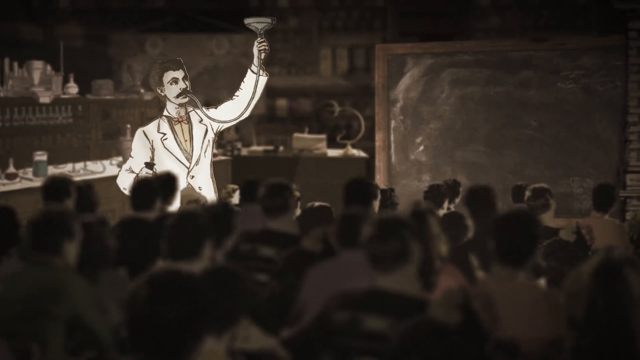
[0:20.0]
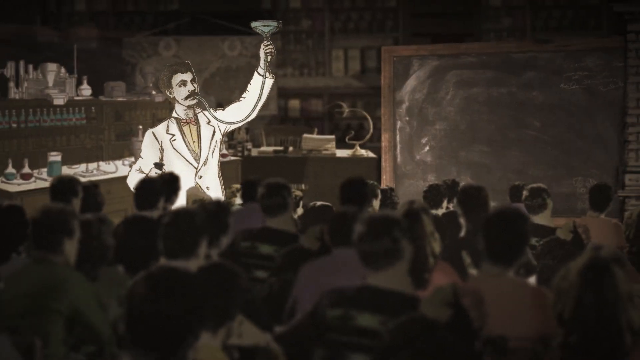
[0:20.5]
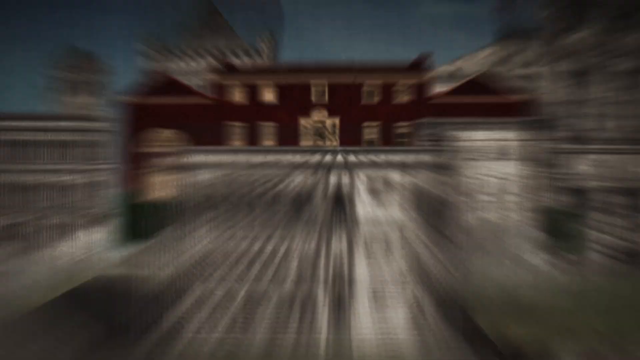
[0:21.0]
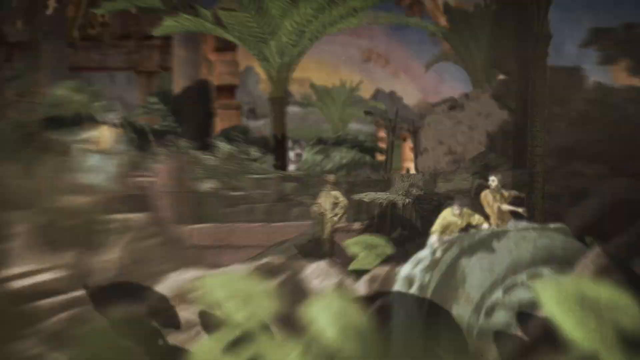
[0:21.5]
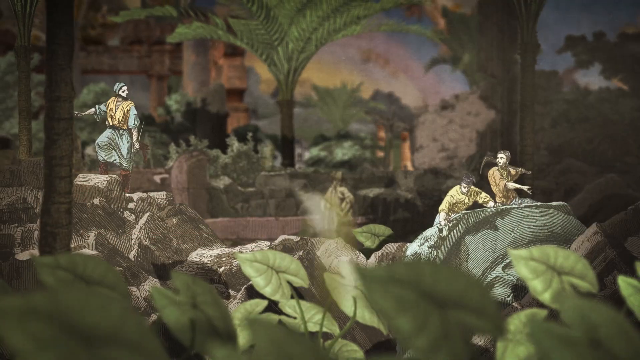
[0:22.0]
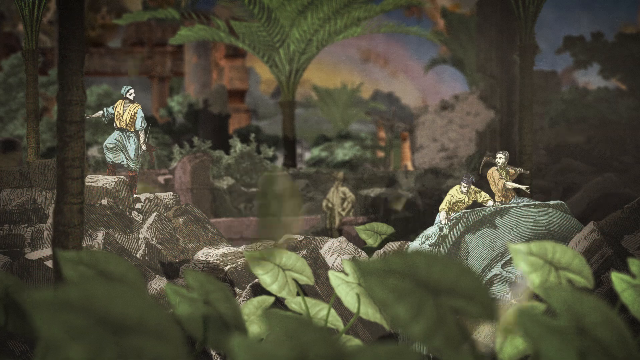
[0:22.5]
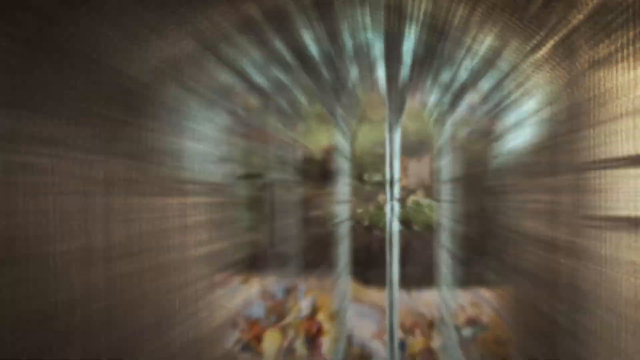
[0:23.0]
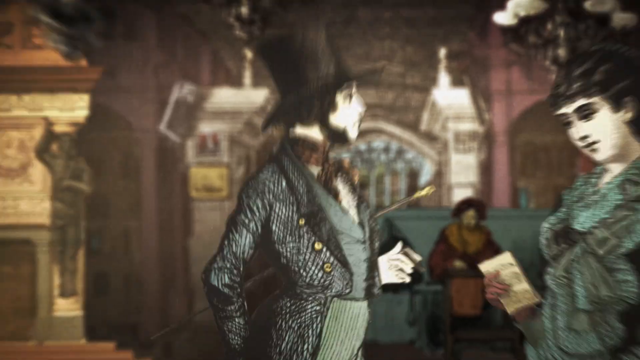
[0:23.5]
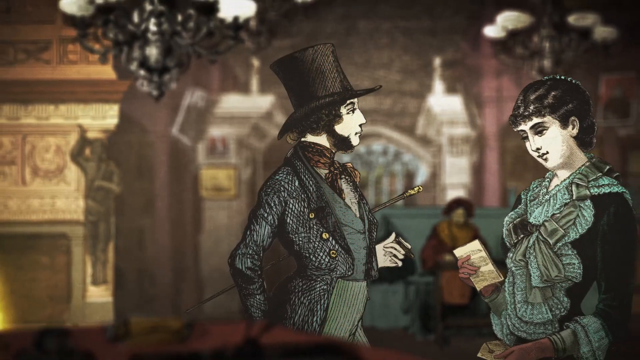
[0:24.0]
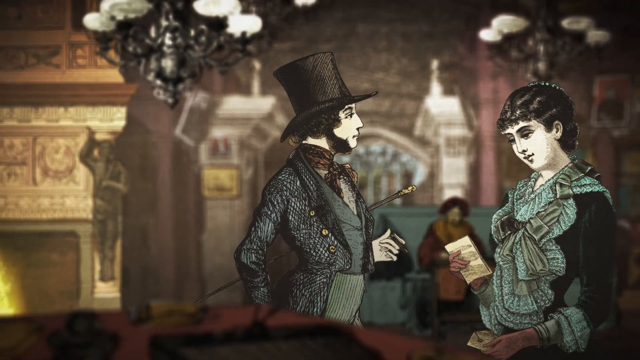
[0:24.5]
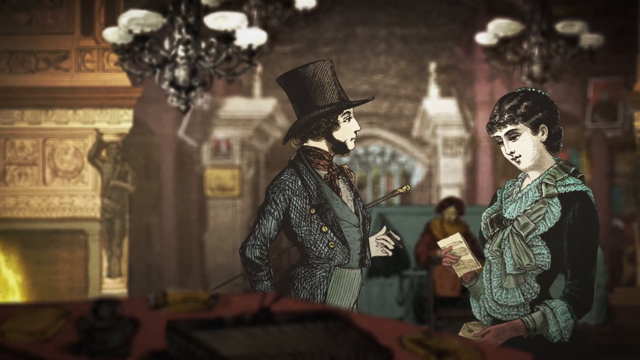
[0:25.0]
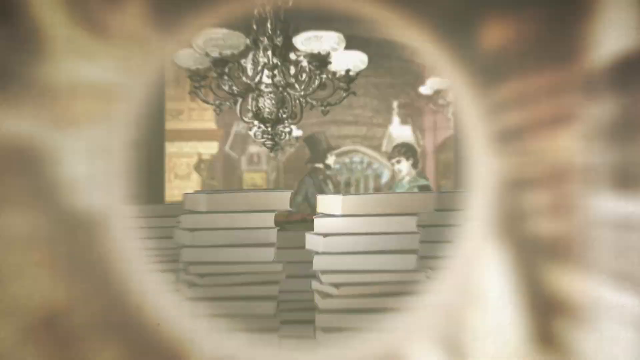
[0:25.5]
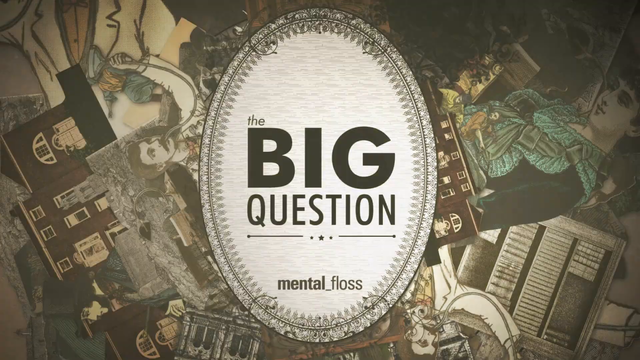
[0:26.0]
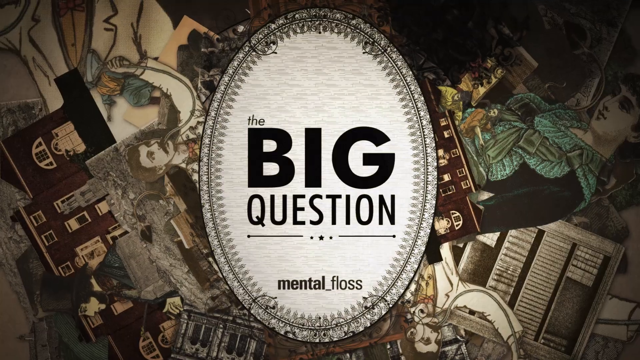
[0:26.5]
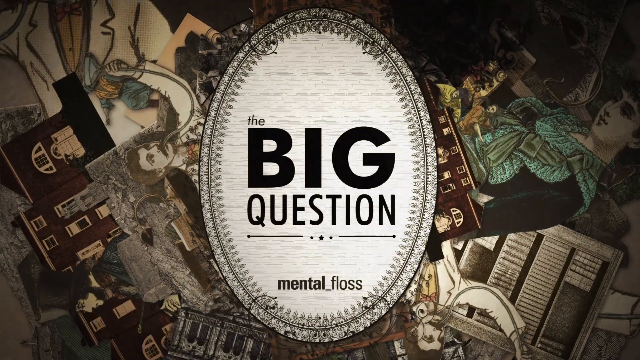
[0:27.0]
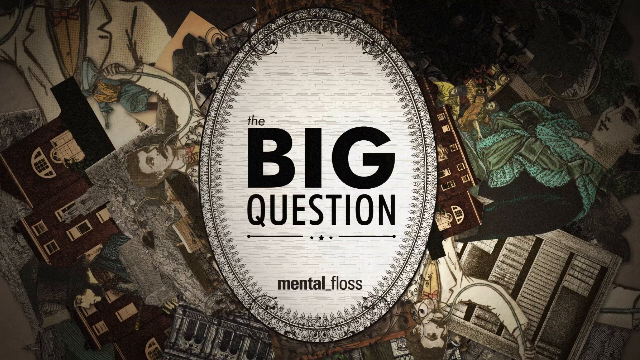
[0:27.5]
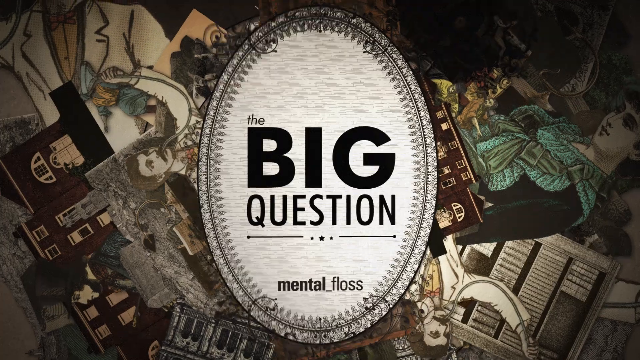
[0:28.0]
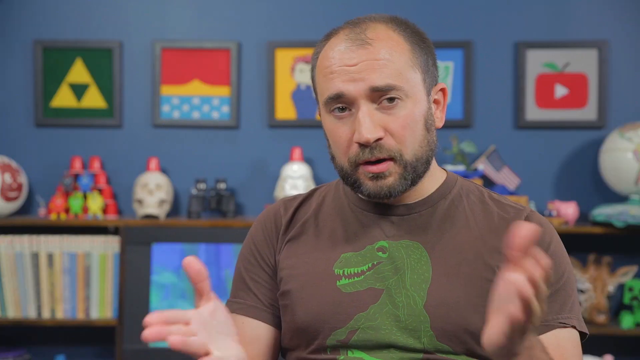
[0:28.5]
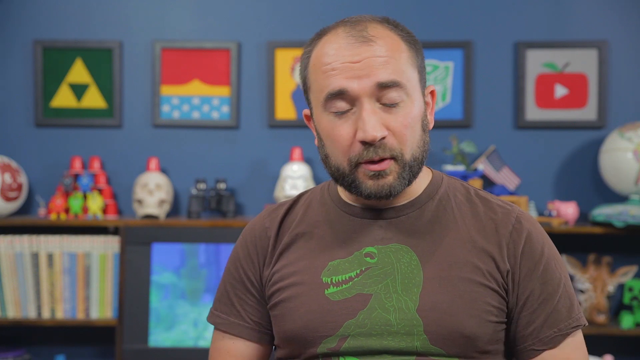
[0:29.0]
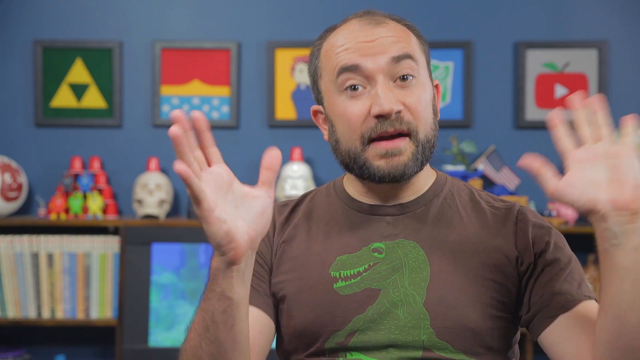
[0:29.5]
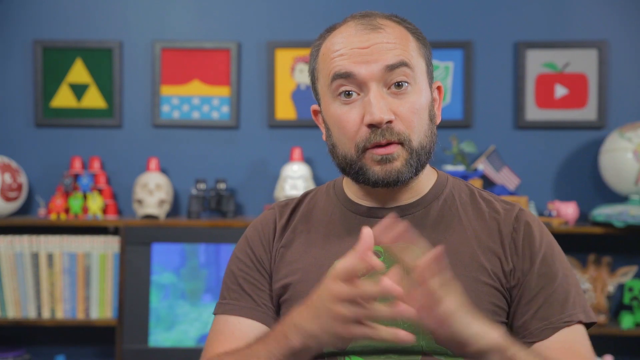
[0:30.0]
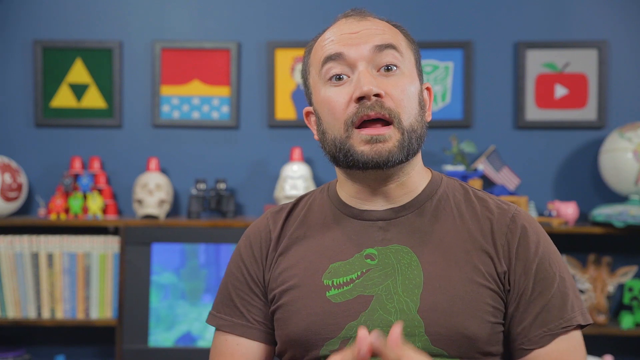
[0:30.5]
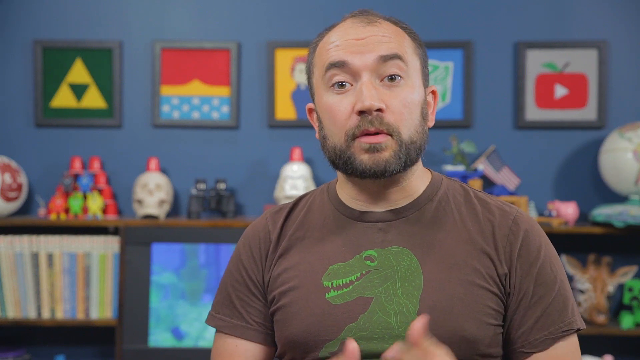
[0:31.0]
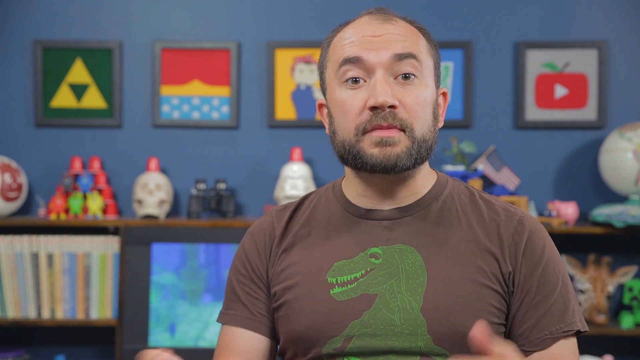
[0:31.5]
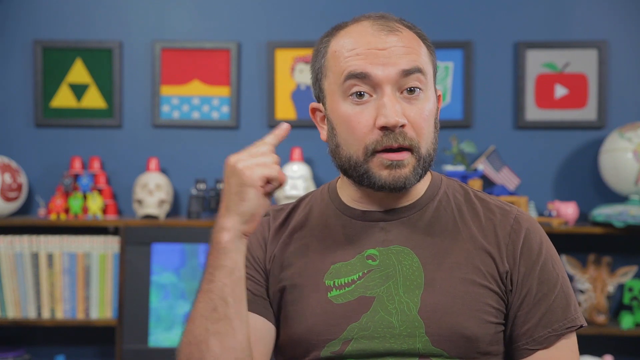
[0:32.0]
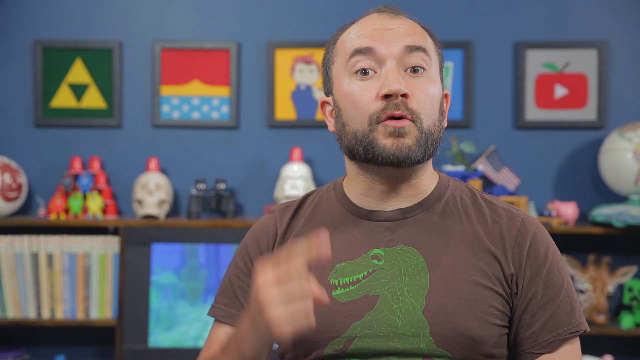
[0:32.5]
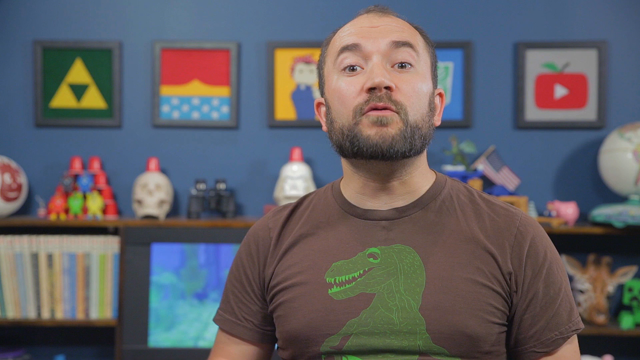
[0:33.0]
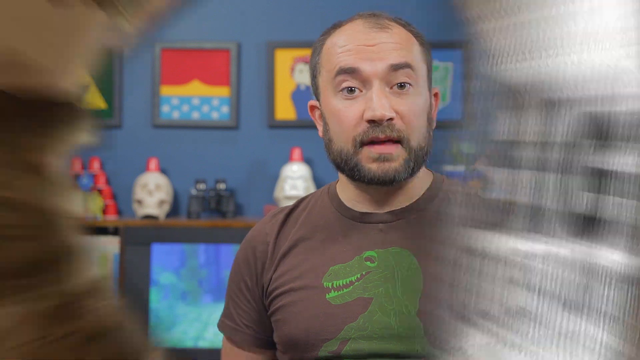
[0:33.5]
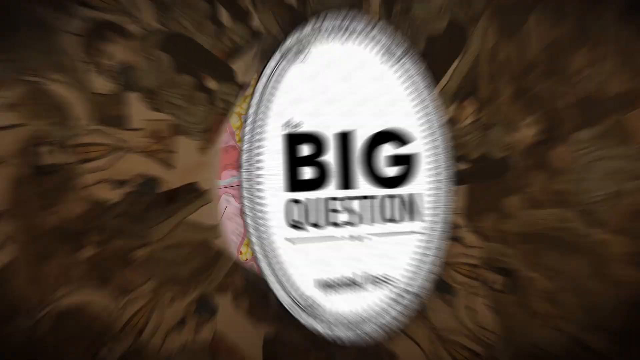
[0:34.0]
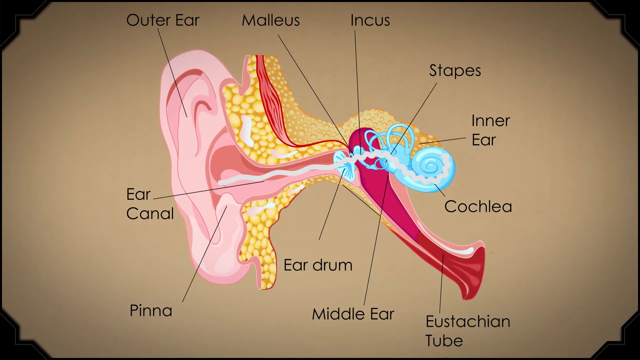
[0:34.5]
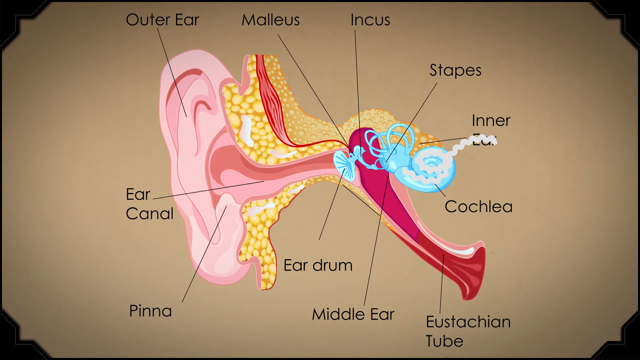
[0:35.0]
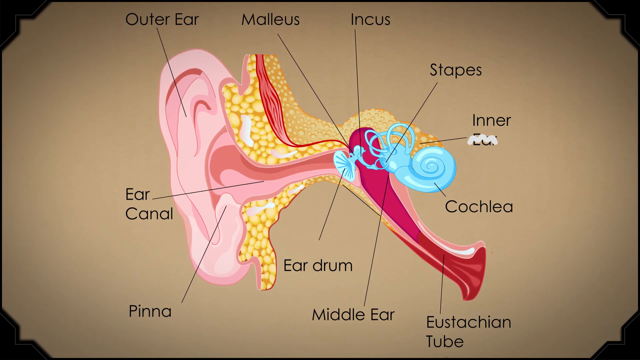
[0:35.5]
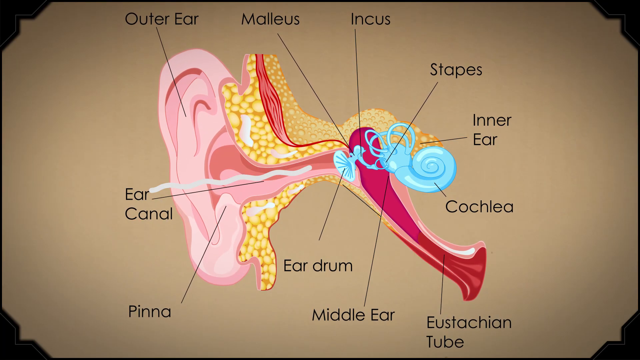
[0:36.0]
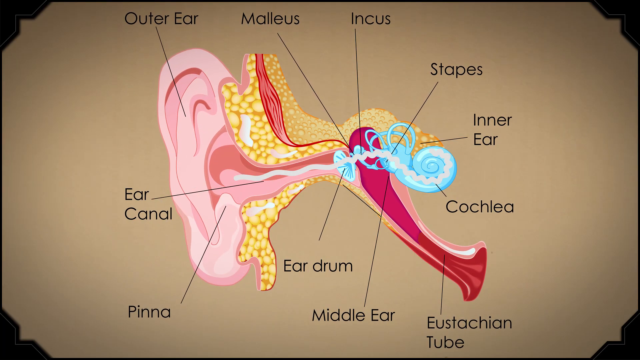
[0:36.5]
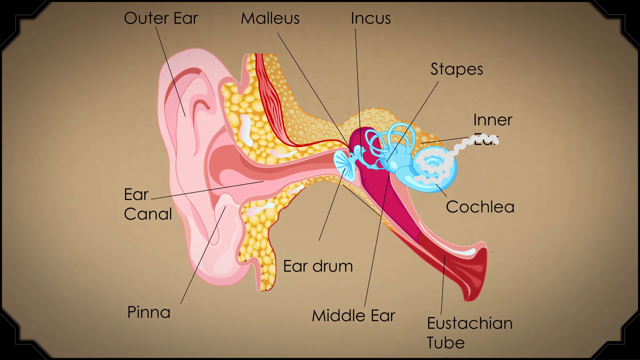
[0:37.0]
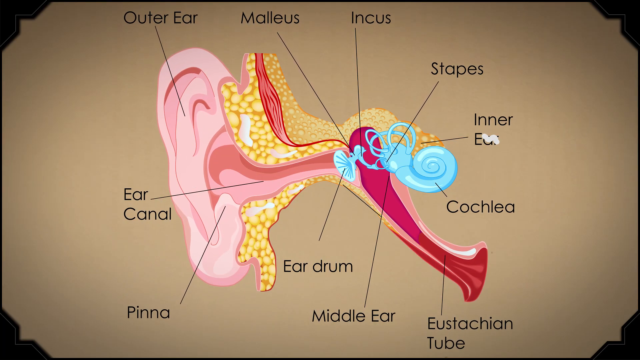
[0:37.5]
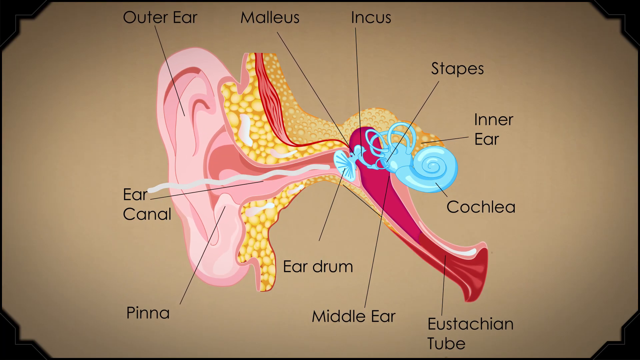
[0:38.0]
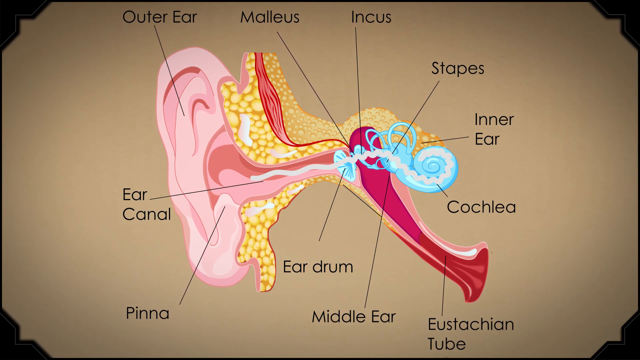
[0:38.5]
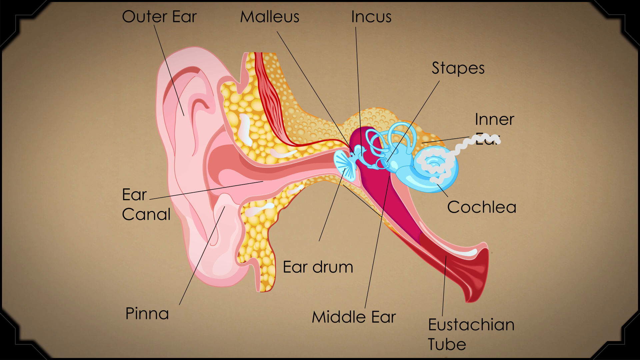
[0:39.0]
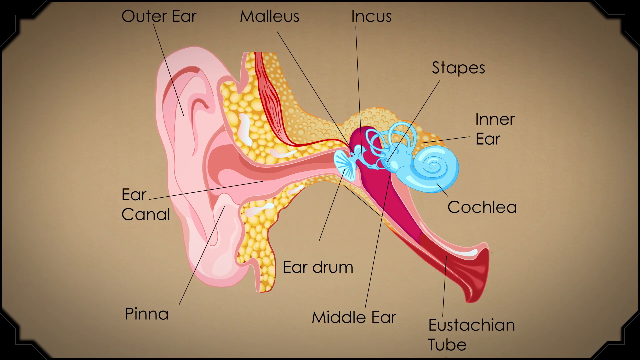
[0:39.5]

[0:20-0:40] An animated image shows a number of people in a crowd who appear to be sitting, with a scientist in front of them who appears to be in a laboratory, holding something above his head. The video then cuts through a number of scenes, all in a pop-up book style, with mostly old-fashioned images. The pop-up book sequence ends with text that says "the big question." It changes to a man sitting in a room, wearing a brown shirt with a dinosaur on it, with some art and small objects behind him. He talks towards the camera and emphasizes with his hands, at one point pointing towards his ear. After that, the text "the big question" comes up again, then disappears to show a diagram of the ear with a number of its parts labeled and a visual depiction of sound going into it, represented by a white line.